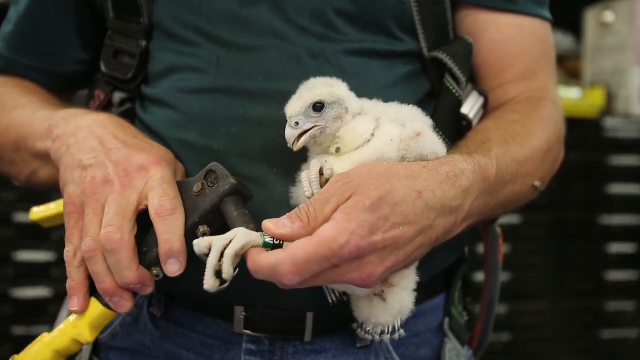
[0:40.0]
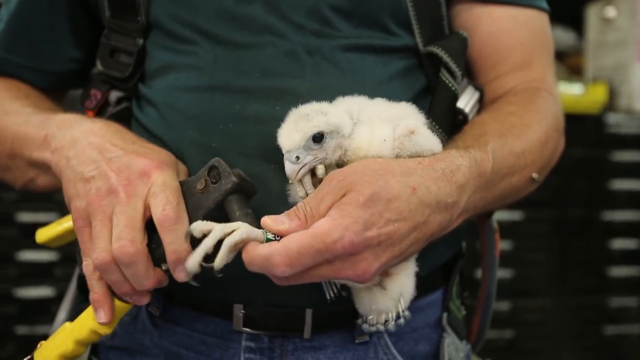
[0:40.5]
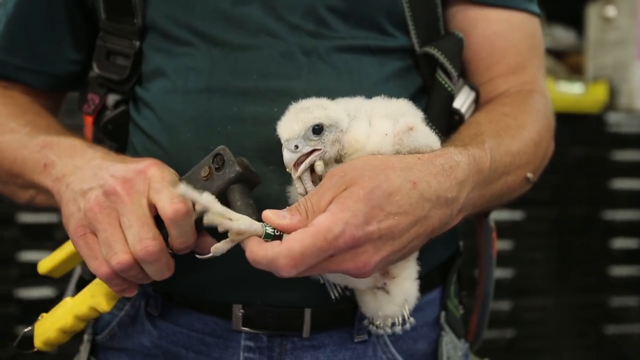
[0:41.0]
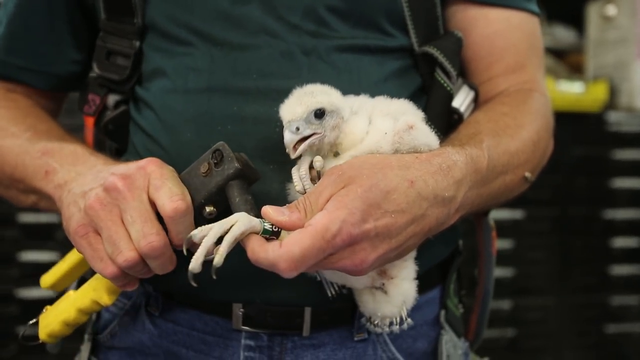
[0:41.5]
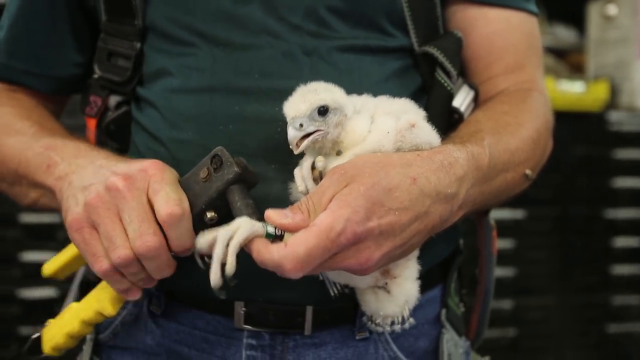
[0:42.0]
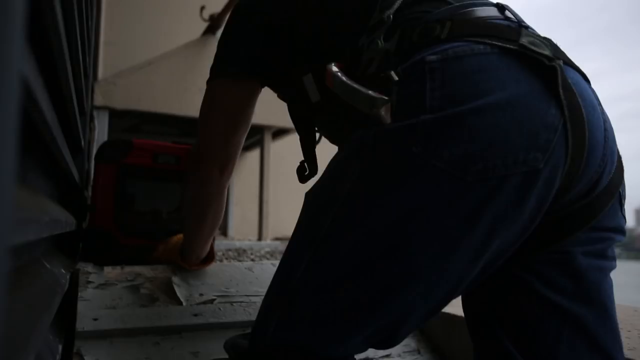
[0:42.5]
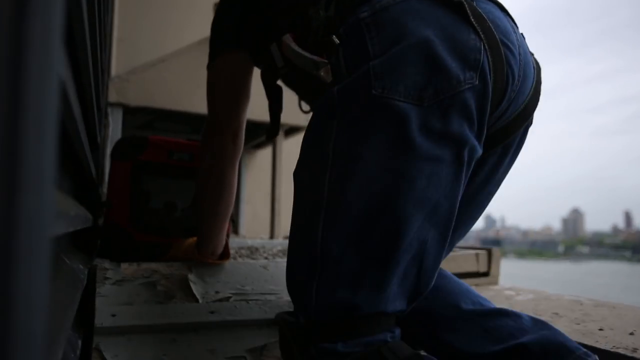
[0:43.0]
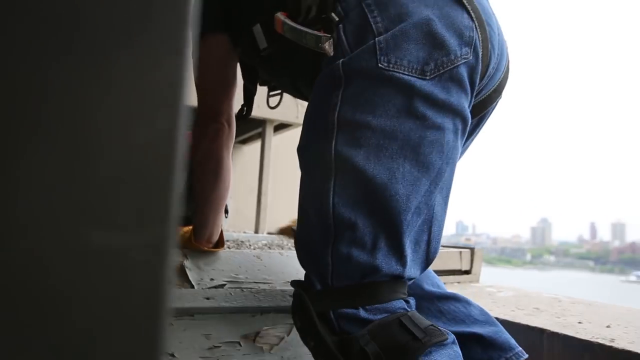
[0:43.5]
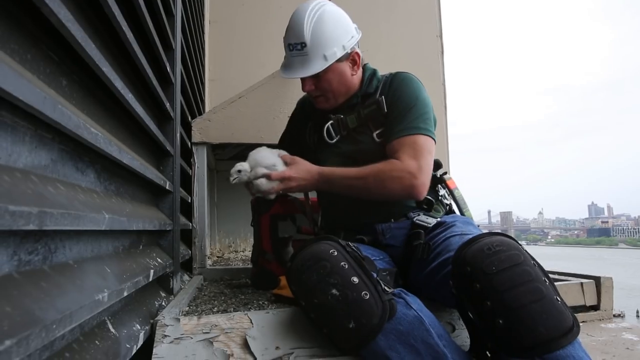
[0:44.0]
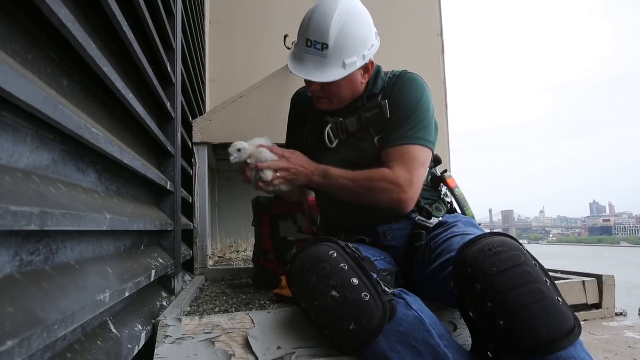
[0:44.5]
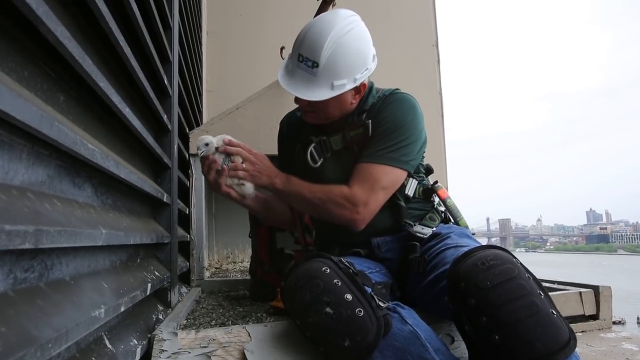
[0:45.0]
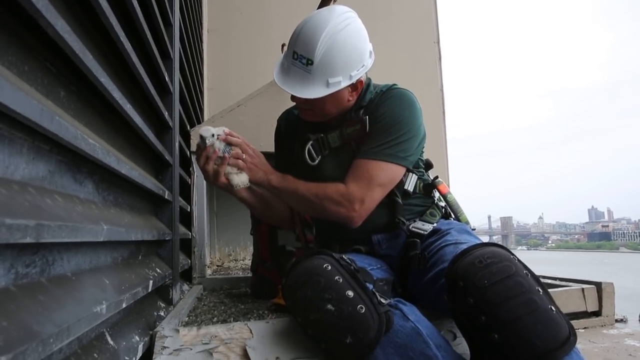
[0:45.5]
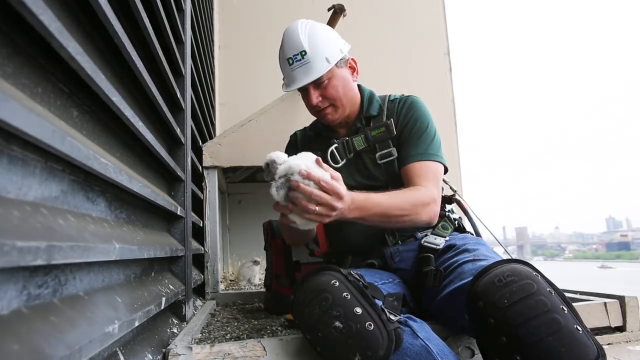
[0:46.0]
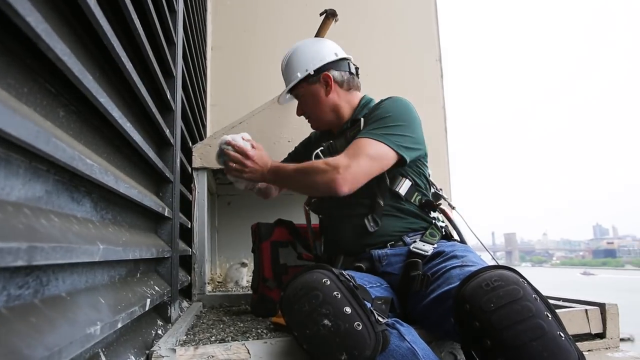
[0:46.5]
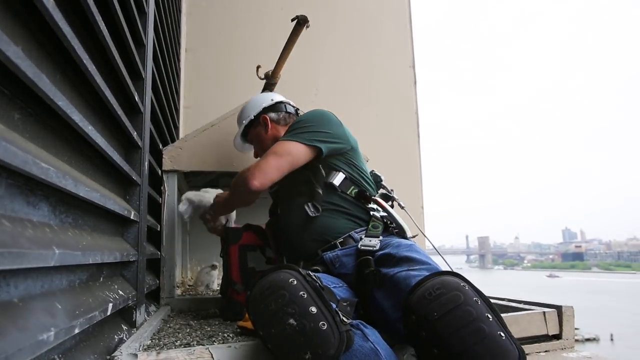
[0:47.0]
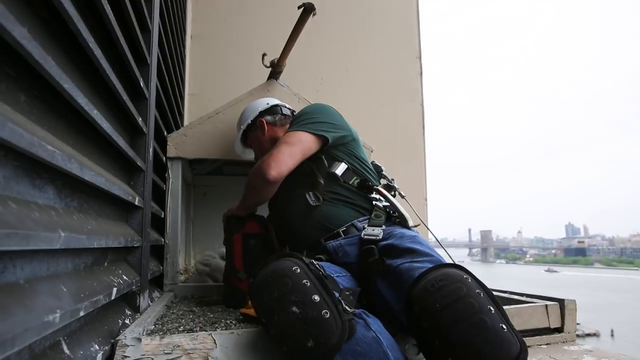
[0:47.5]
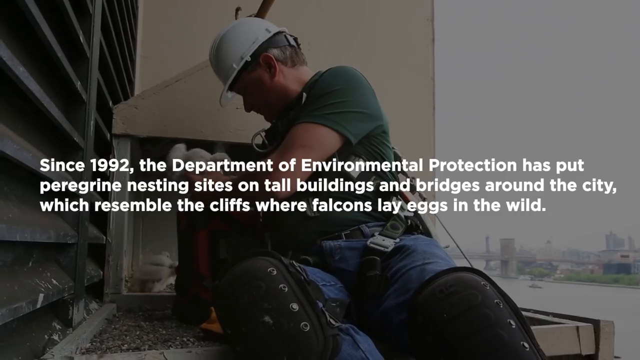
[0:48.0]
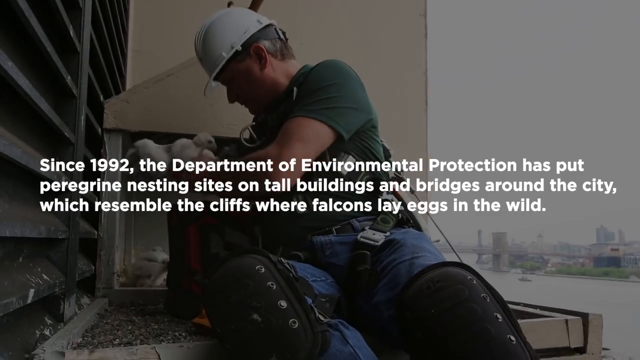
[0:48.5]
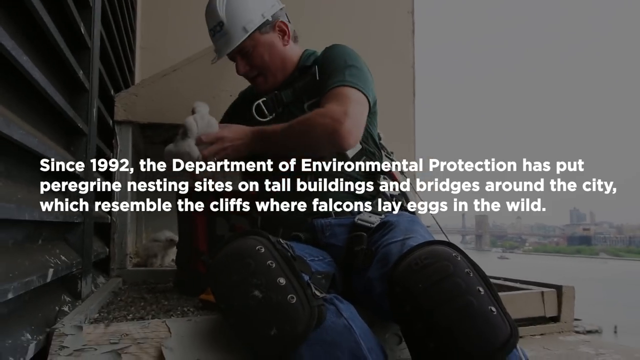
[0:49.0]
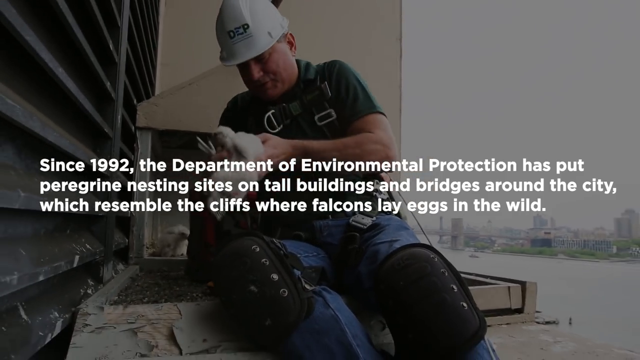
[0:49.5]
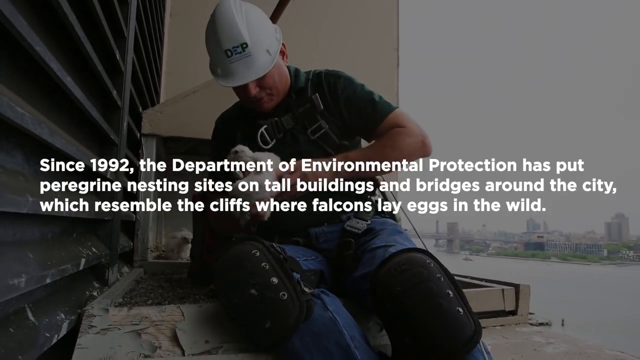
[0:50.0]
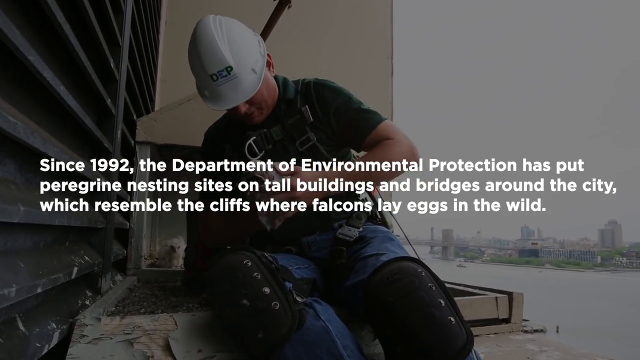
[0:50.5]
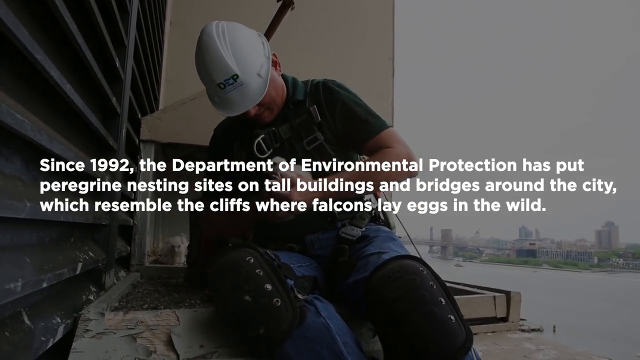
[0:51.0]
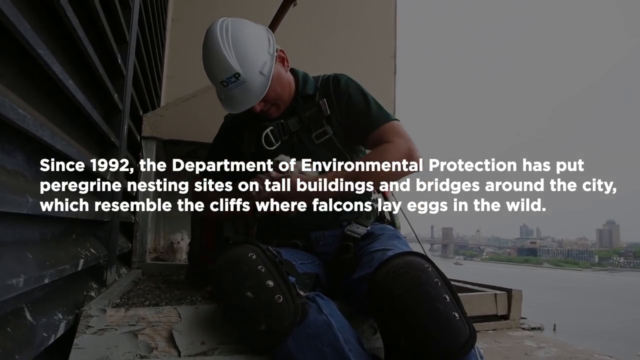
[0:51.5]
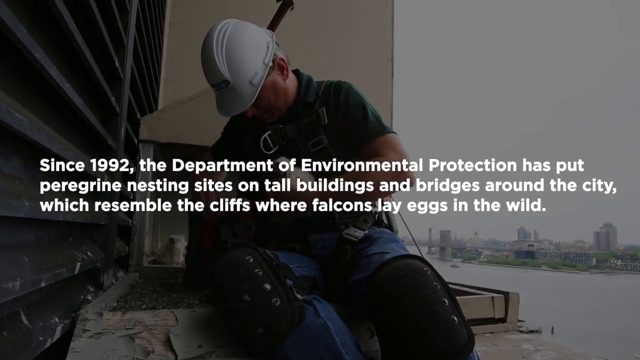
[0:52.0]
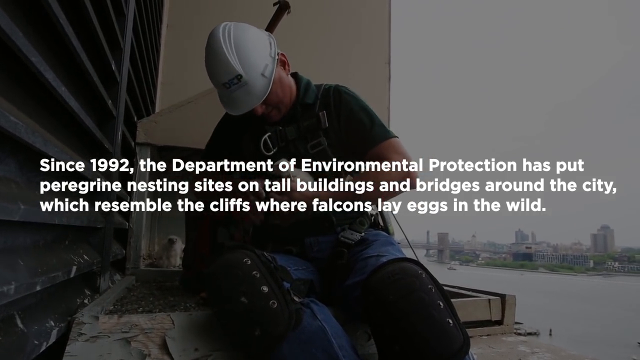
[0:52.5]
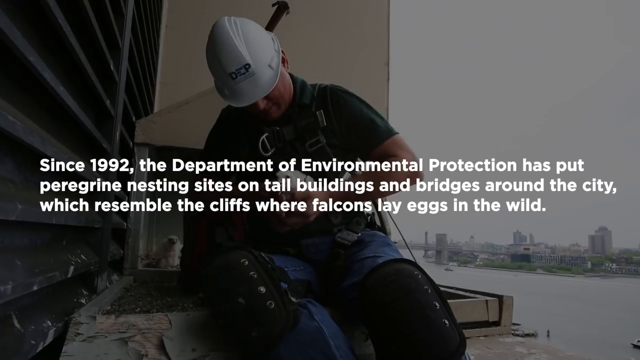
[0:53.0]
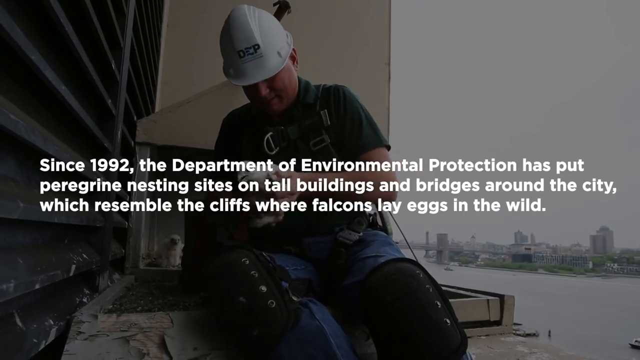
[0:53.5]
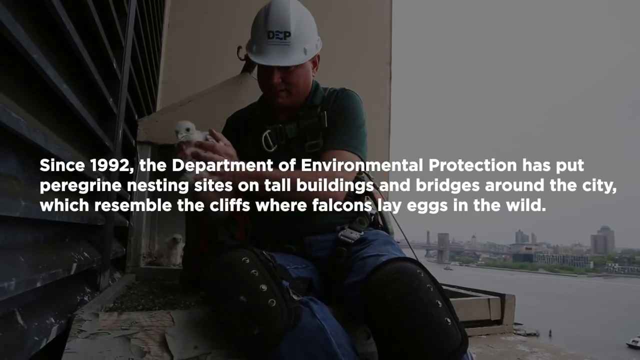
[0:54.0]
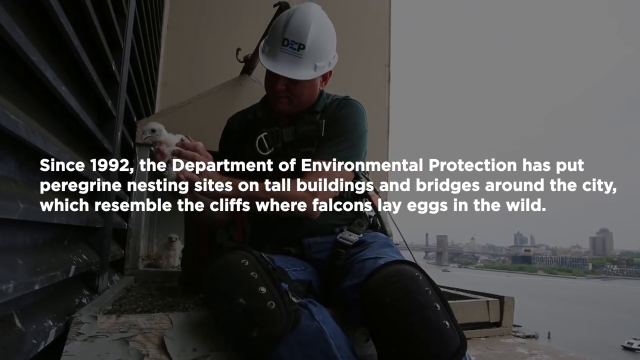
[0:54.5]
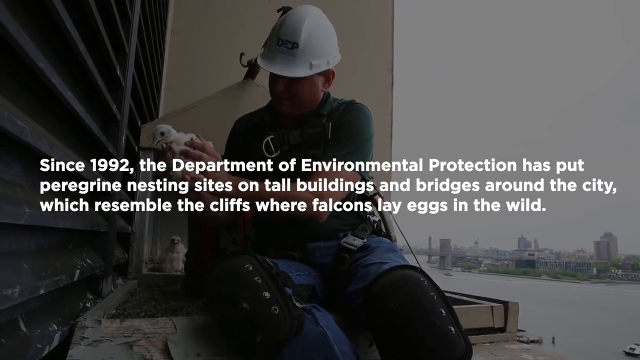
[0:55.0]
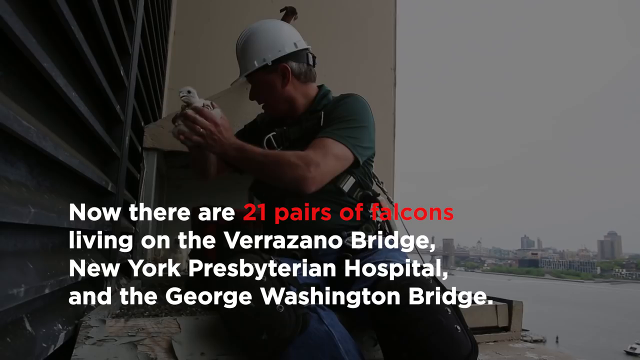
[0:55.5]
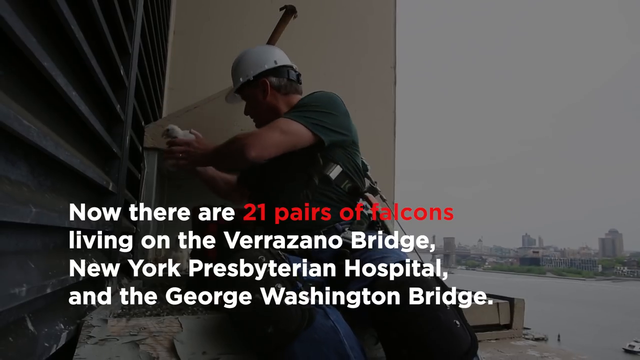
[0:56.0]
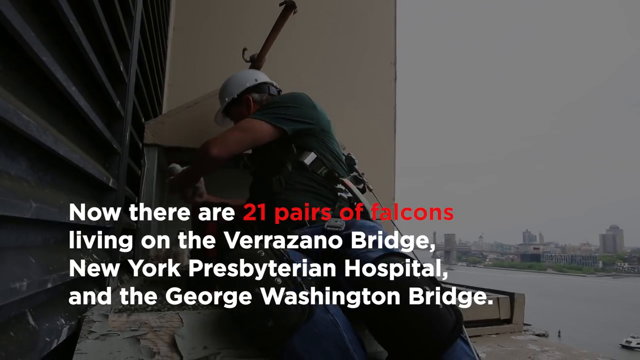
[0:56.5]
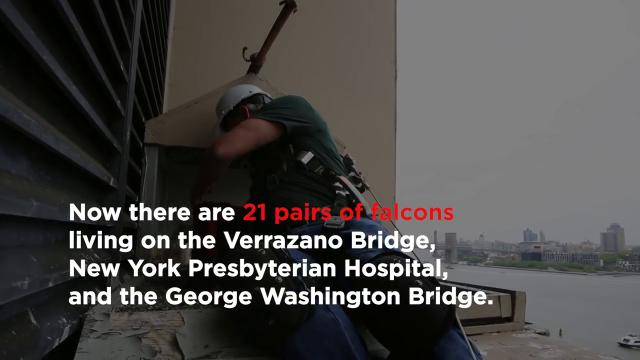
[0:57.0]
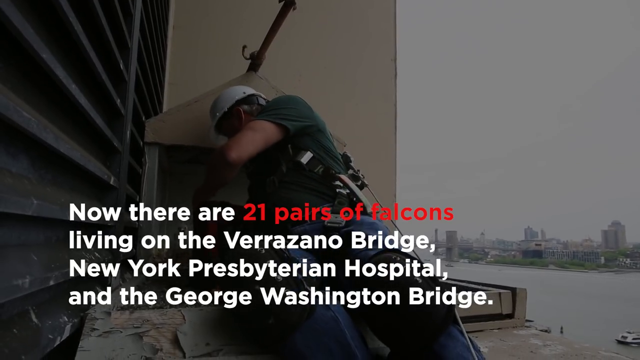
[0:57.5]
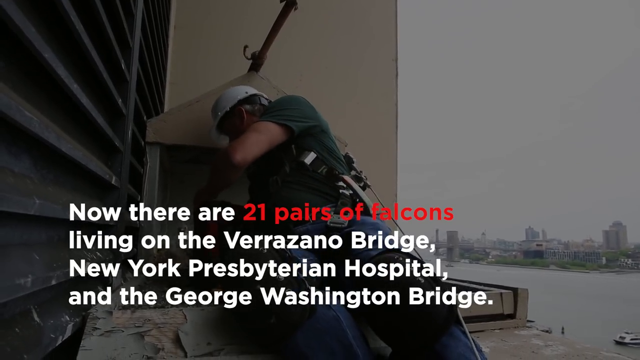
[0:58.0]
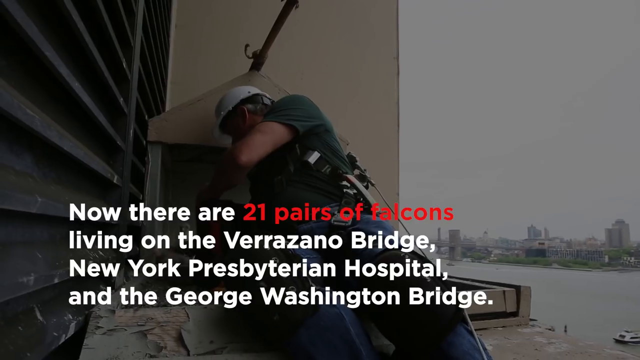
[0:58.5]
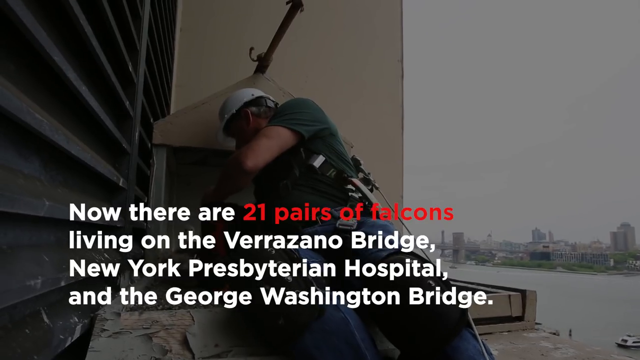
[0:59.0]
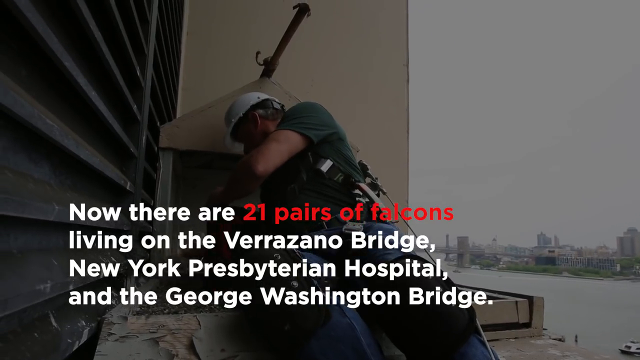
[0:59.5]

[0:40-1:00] Someone shown from the shoulders down holds a peregrine falcon chick in his left hand while using a black instrument in his right hand to place a tag on the chick's left leg; the chick squirms a bit. A person then crawls on what looks like a ledge or roof of a building, and then sits on the ledge holding a peregrine falcon chick. He is a man wearing a white hard hat, a green short-sleeved shirt and blue pants. Text on the screen reads, "Since 1992, the Department of Environmental Protection has put peregrine nesting sites on tall buildings and bridges around the city, which resemble the cliffs where falcons lay eggs in the wild." The man reaches around and picks up another chick from what looks to be a nest or coop built for it. He holds the falcon in both hands and appears to hold it up and examine it, then reaches behind him and puts the falcon back in the coop. The text changes to read, "Now there are 21 pairs of falcons living on the Verrazano Bridge, New York Presbyterian Hospital, and the George Washington Bridge."